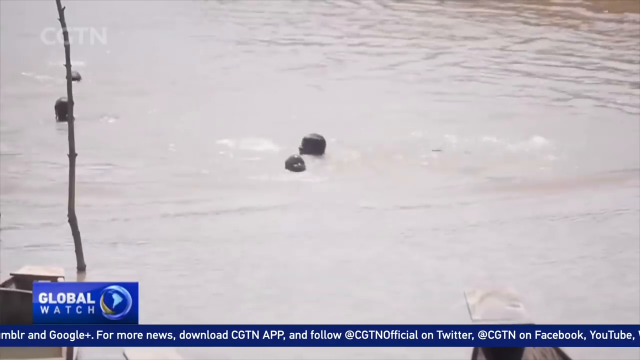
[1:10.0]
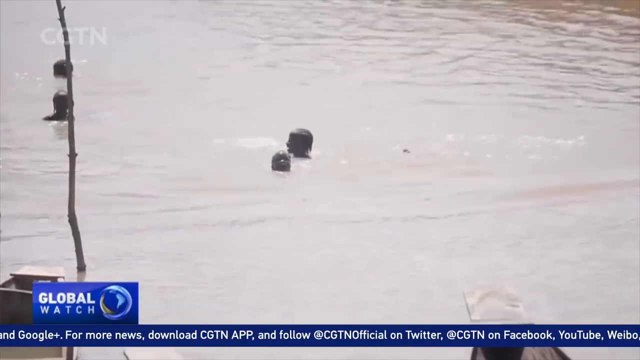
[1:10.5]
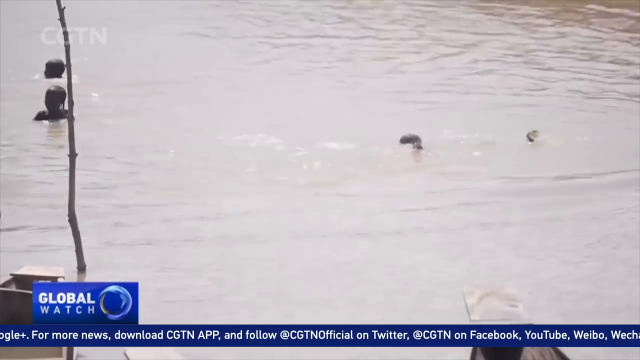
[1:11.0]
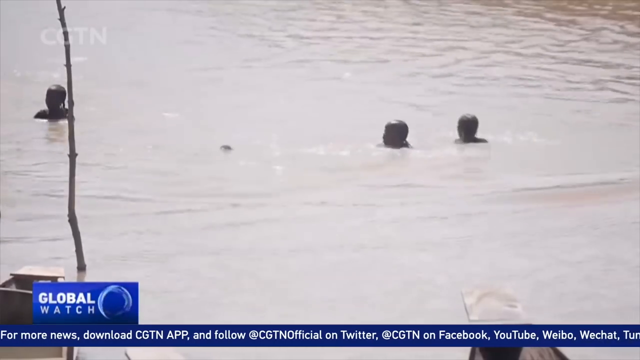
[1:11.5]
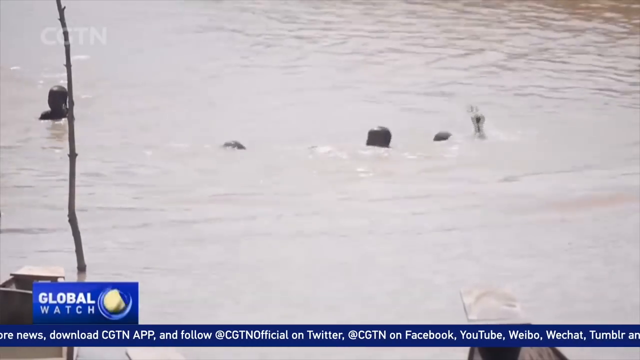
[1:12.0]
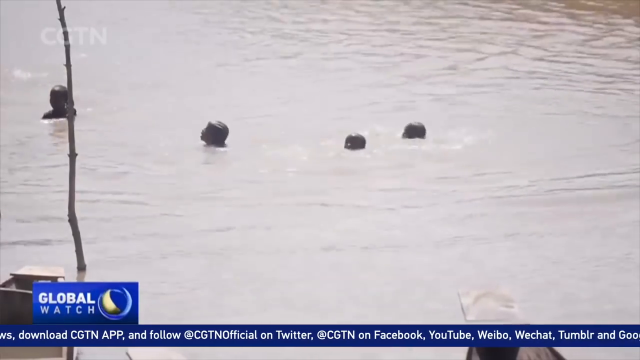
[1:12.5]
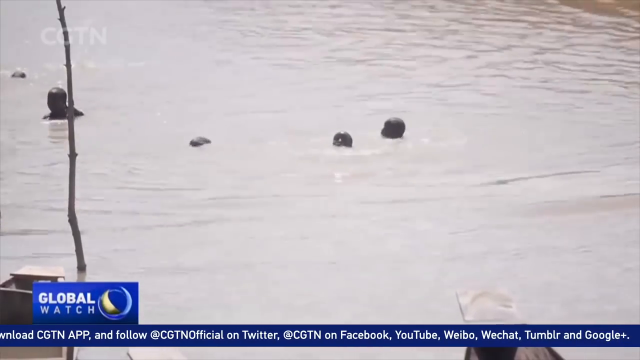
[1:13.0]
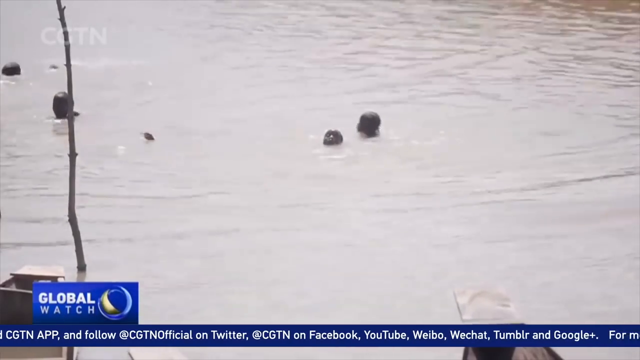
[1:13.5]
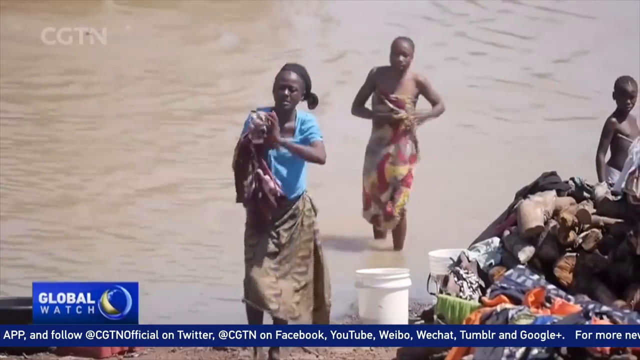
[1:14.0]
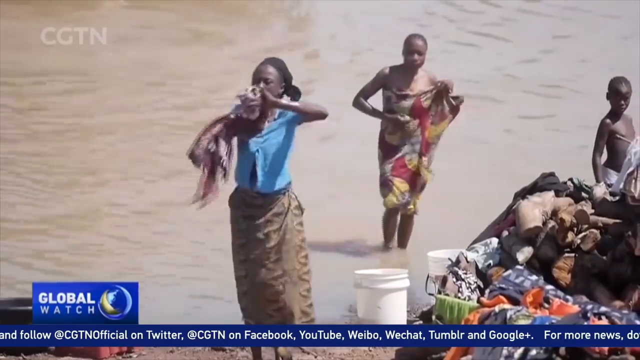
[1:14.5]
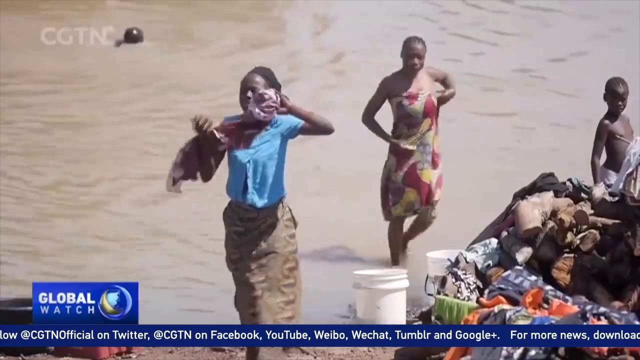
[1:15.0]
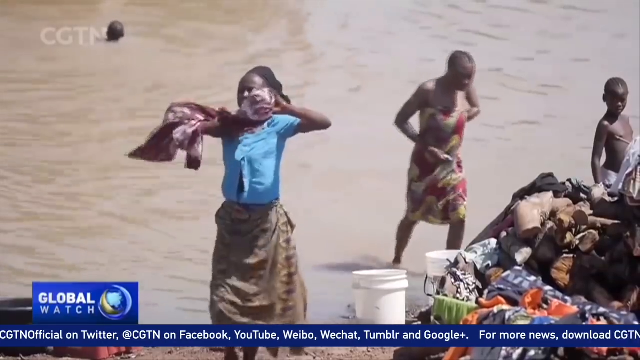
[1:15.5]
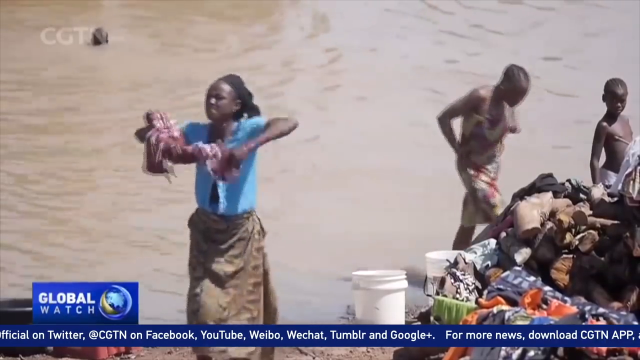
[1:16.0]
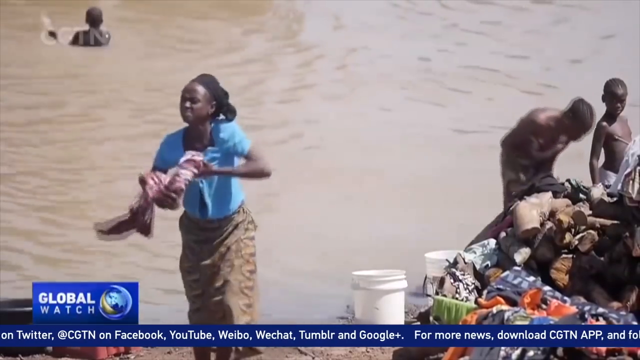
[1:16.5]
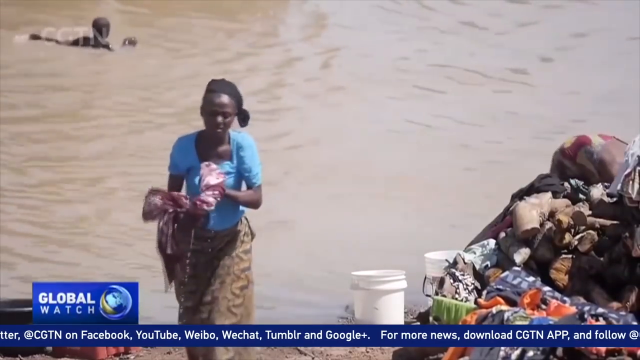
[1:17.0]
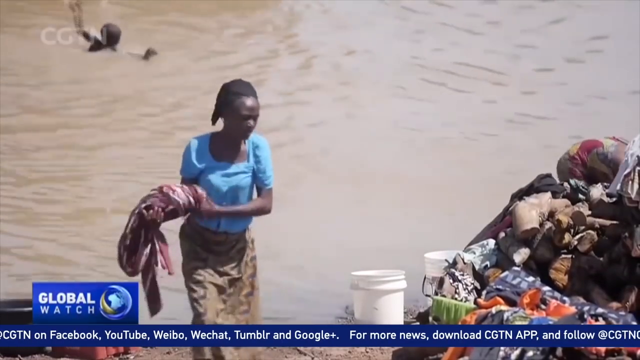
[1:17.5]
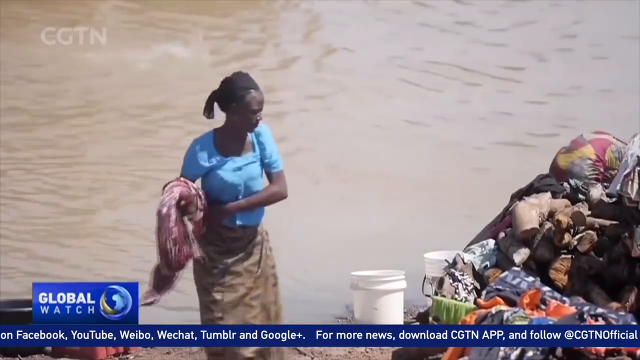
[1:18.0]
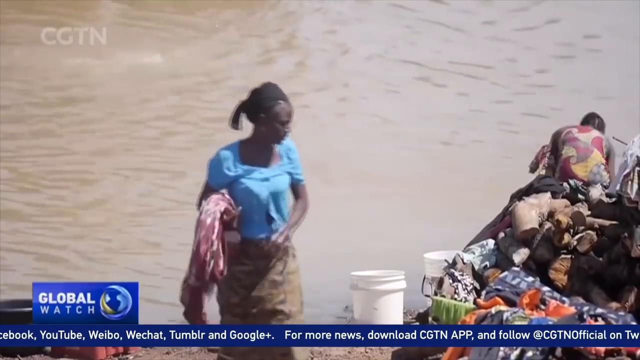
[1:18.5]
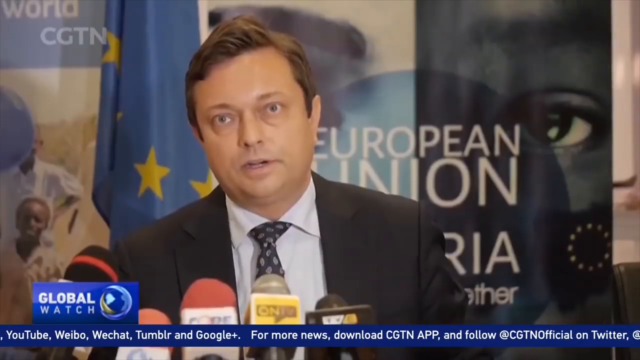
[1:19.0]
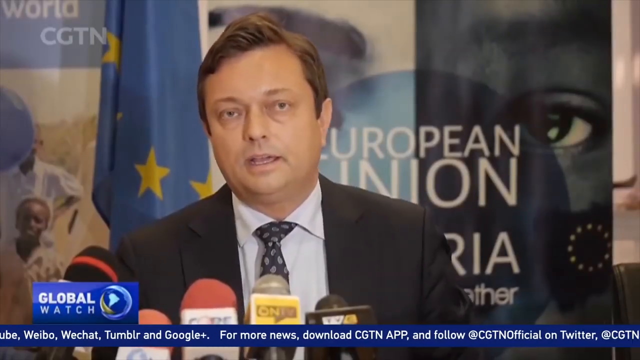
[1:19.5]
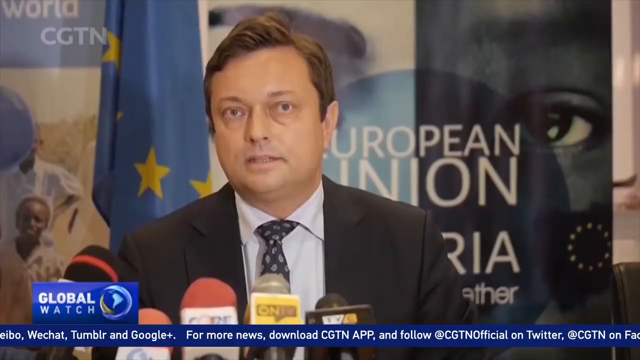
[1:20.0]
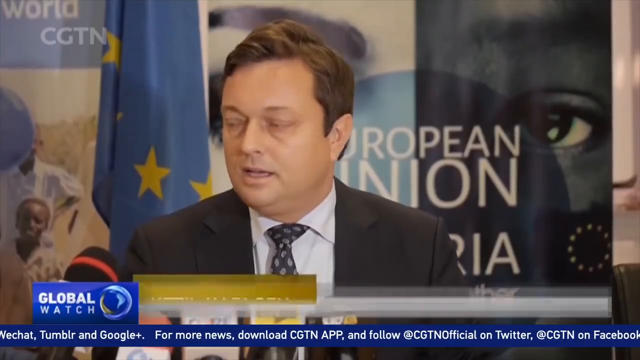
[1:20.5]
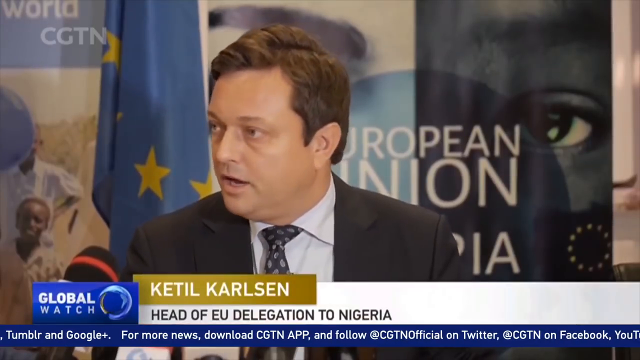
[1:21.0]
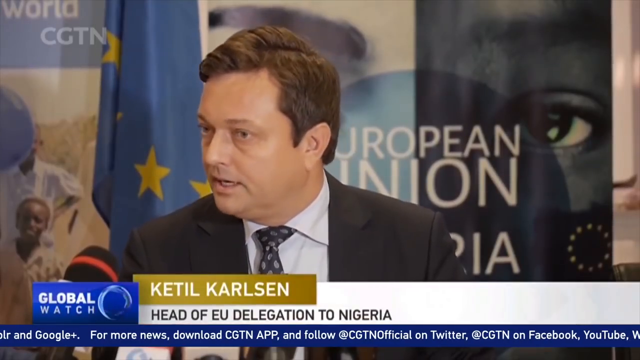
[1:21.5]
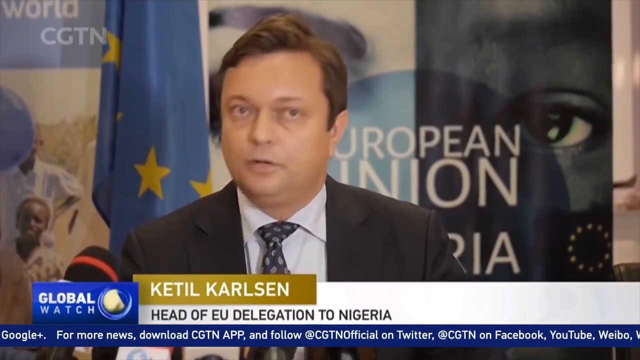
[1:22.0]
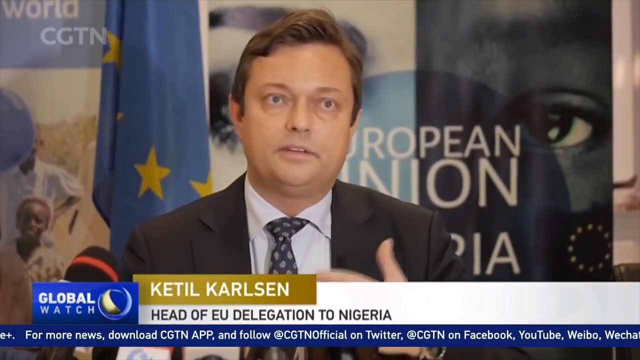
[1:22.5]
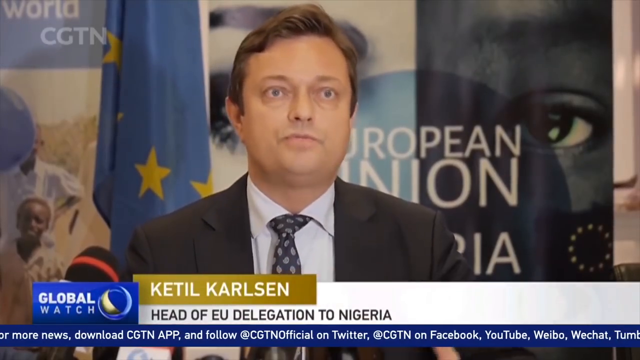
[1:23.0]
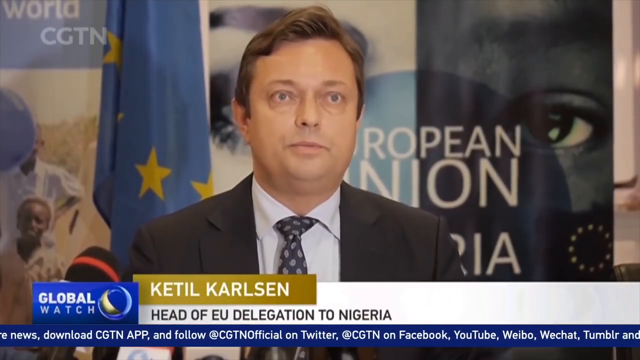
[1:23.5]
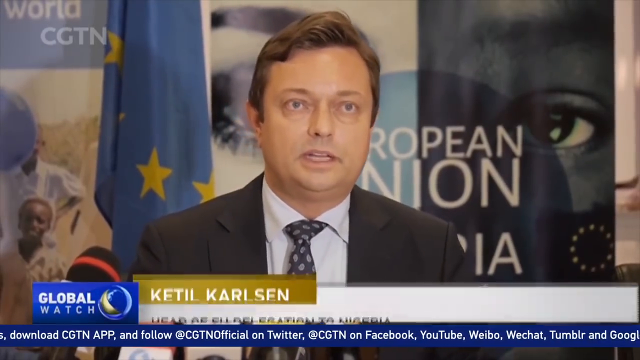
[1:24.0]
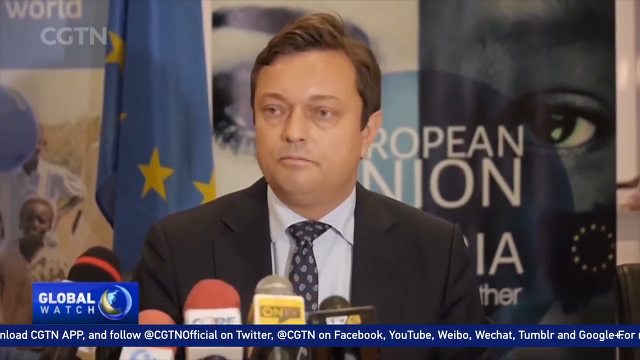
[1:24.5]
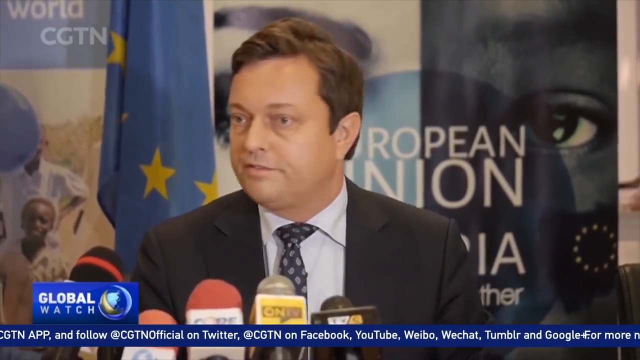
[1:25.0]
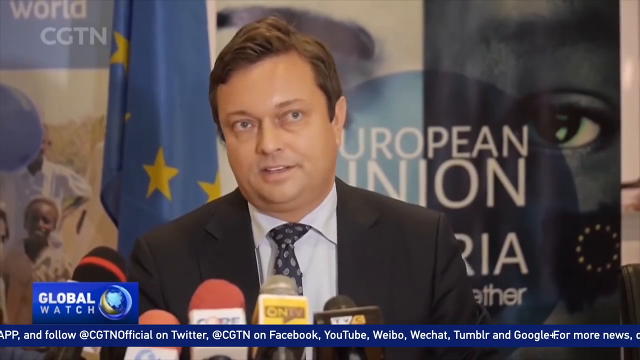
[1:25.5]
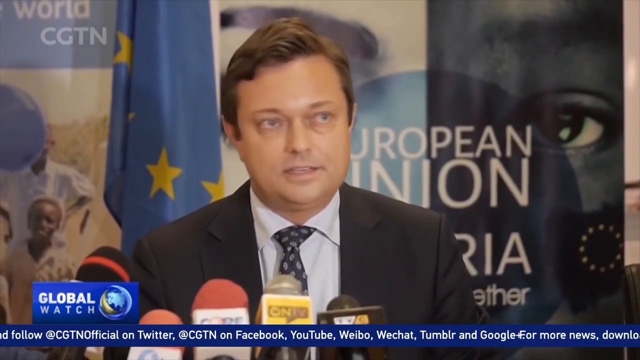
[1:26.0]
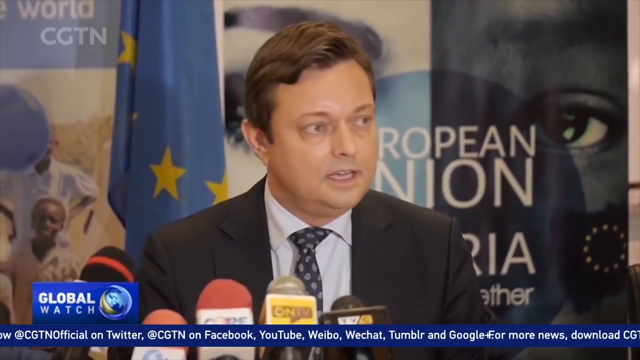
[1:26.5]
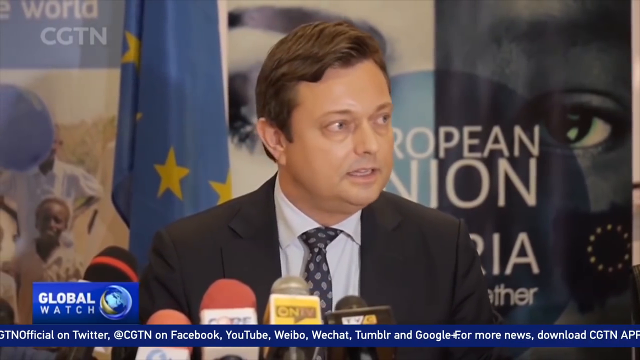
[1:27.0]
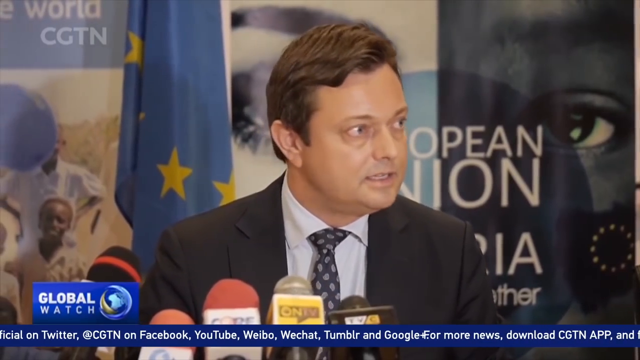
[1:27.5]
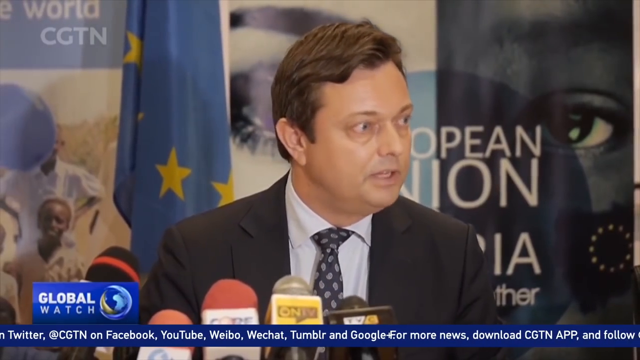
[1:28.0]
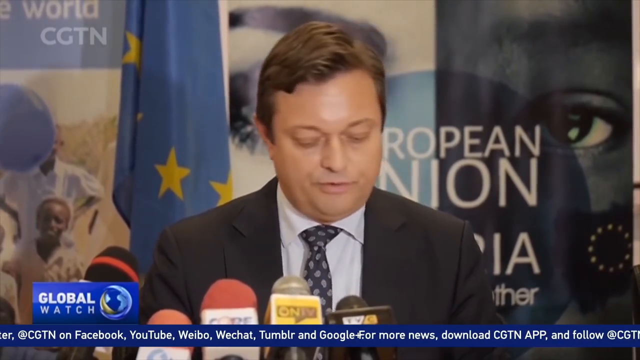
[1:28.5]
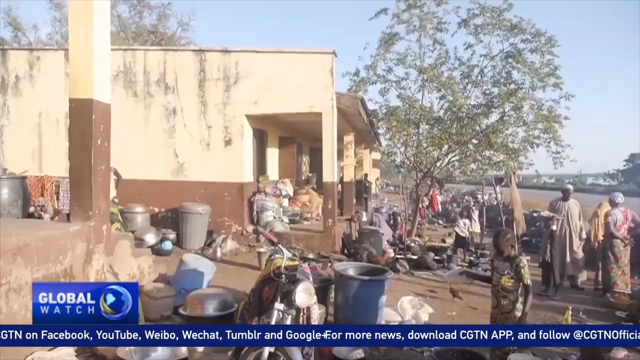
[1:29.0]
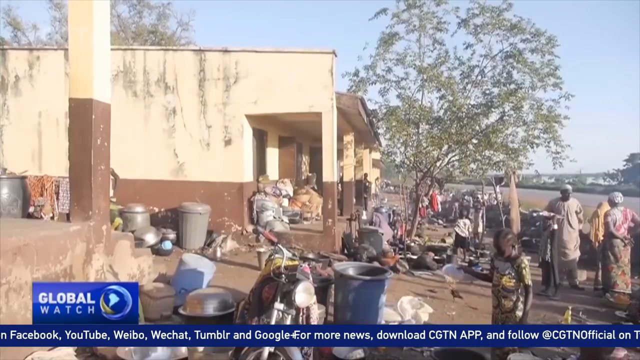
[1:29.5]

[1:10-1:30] Young people swim in deep water, barely able to keep their heads up; only their heads are visible as they repeatedly go under. Women and their children are on one side of the water, while on the other side the young people swim; they seem to be having fun. Ketel Carlson, head of the EU delegation to Nigeria, appears next: a middle-aged man in a black suit with a navy blue and grey tie, standing in front of multiple microphones, seemingly at a press conference about the floods in Nigeria.